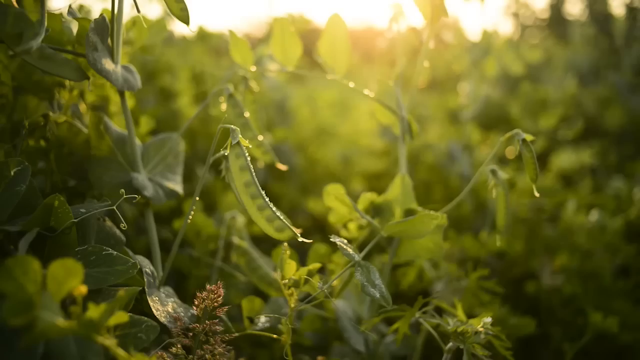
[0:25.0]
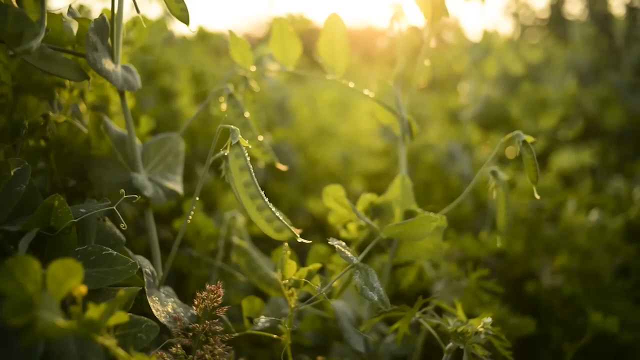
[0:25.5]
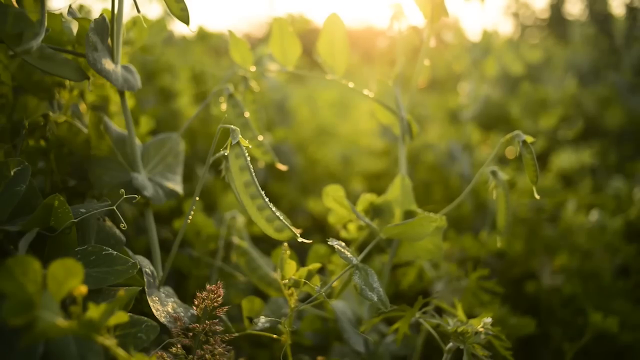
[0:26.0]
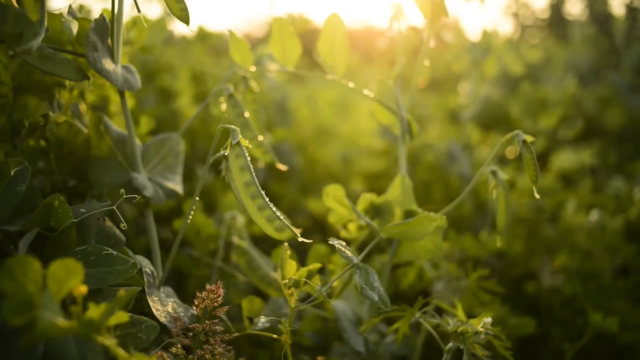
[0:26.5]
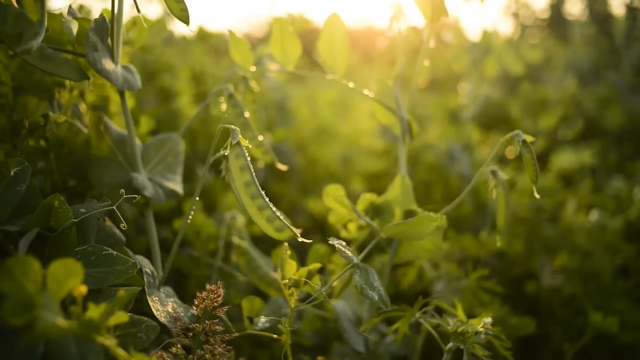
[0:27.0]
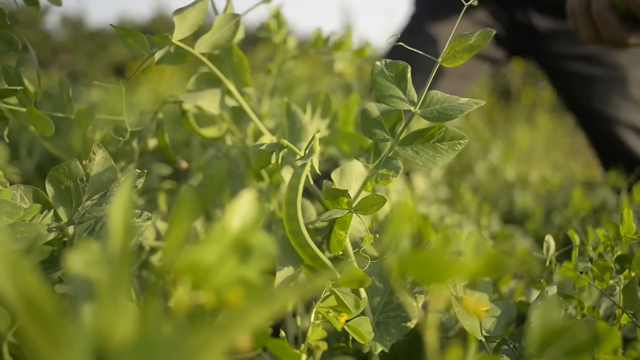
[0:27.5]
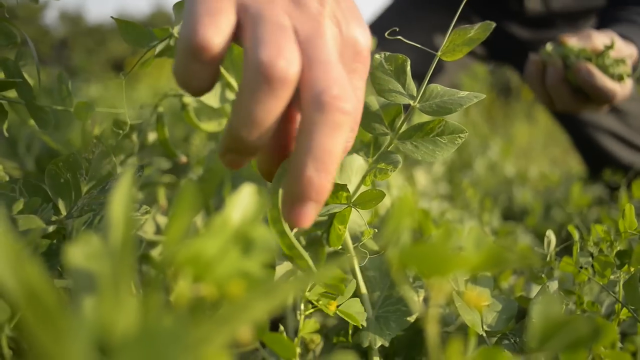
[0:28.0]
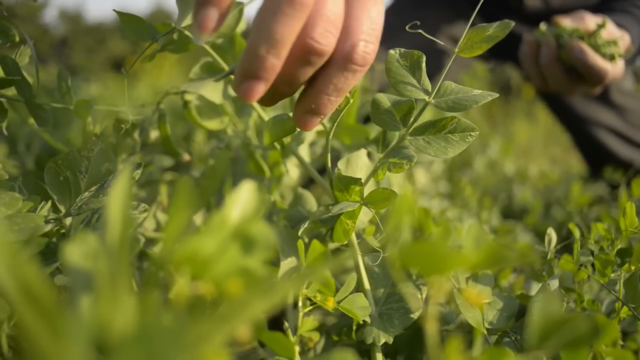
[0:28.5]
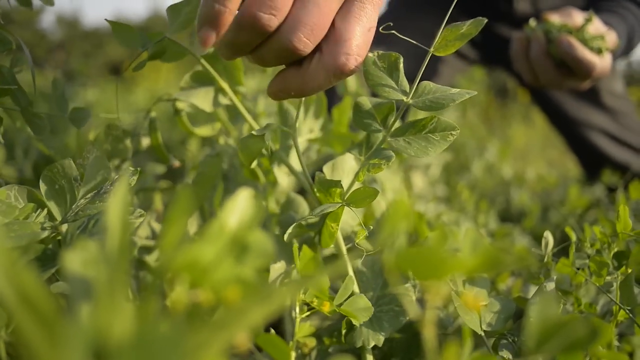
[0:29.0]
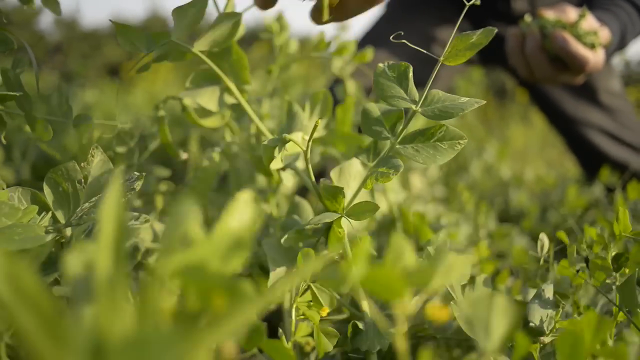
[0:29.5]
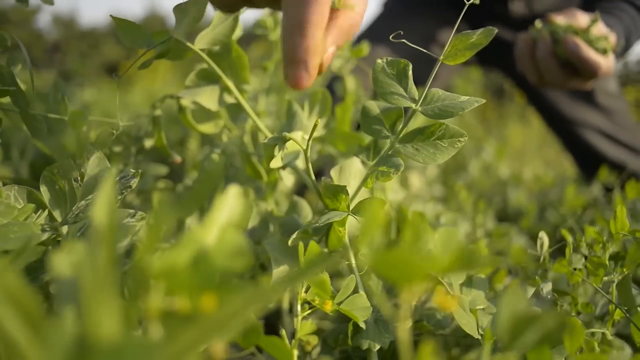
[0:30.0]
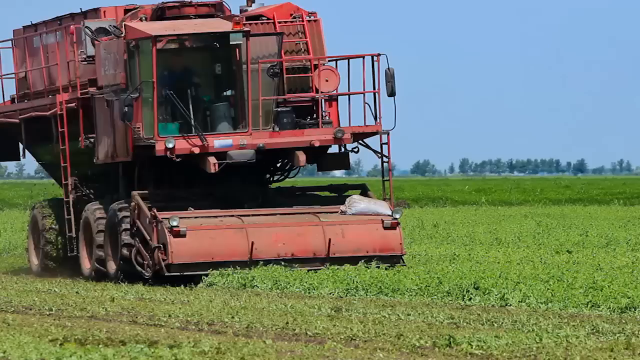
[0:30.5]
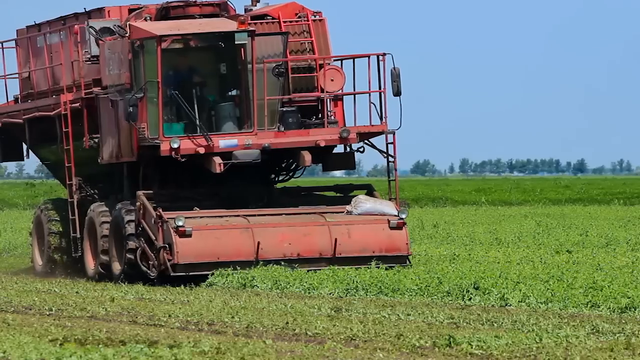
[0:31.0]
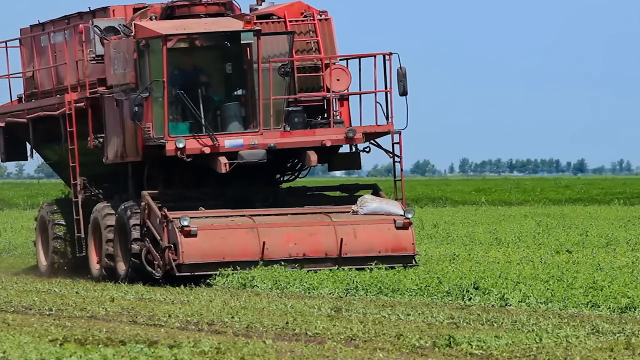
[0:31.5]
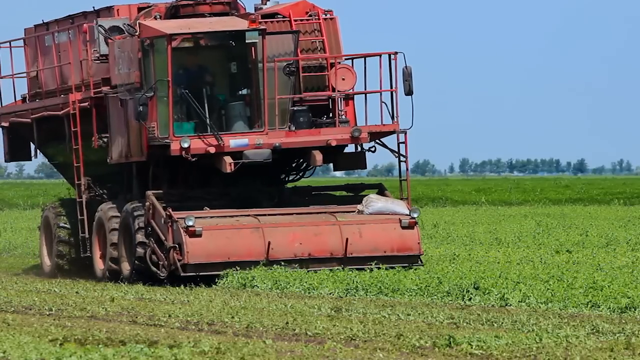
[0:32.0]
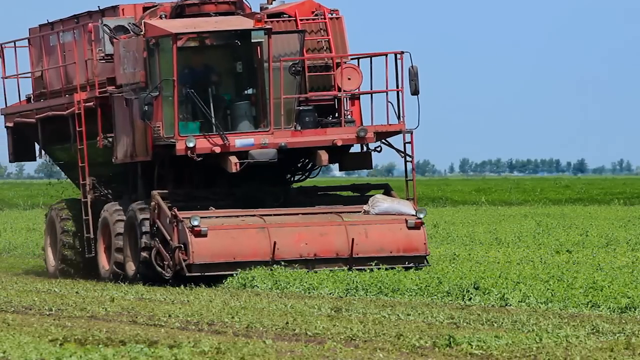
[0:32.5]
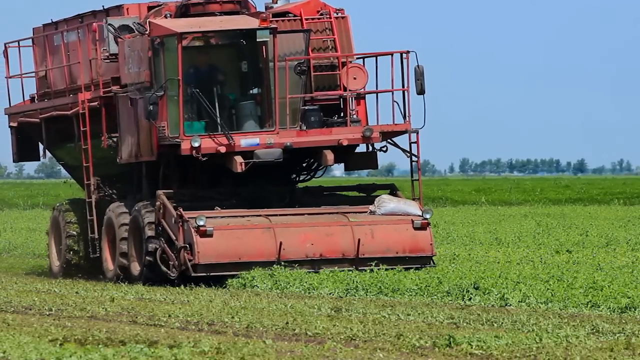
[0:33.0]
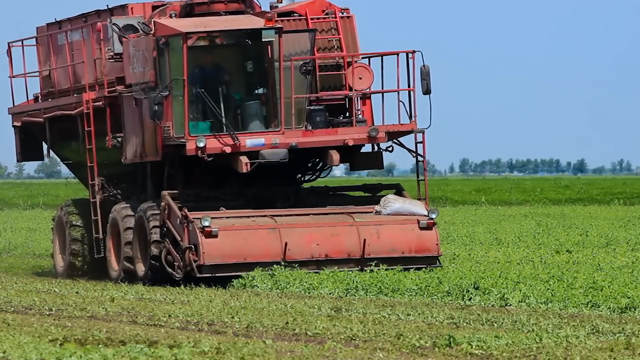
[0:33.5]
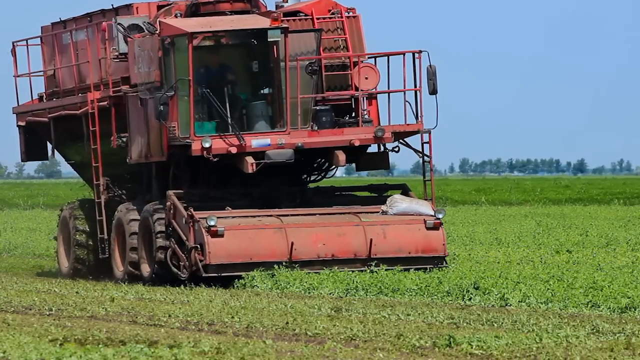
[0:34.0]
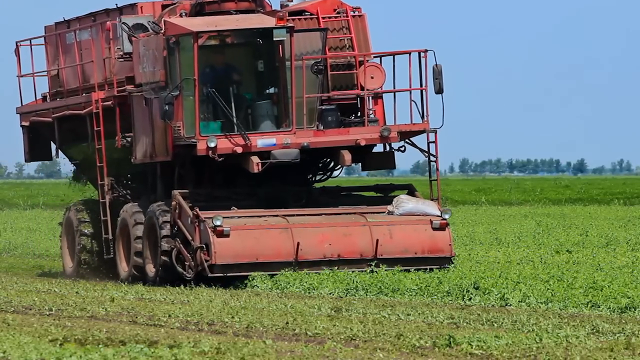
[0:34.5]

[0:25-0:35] A very close-up shot shows the pea plants, now taller, in what looks like mid-morning or late evening light, with the sun appearing to be either rising or setting. A pea is visible on one of the plants. A man picks peas off the plant; only the bottom half of him is visible. He holds a handful of peas in his left hand and picks with his right. He wears dark brown, though mainly only his legs and hand can be seen. Next, a very large machine, which looks like a combine or another type of farm machinery, harvests the pea plants, rolling slowly over them and picking them. Three tires are visible on its left-hand side.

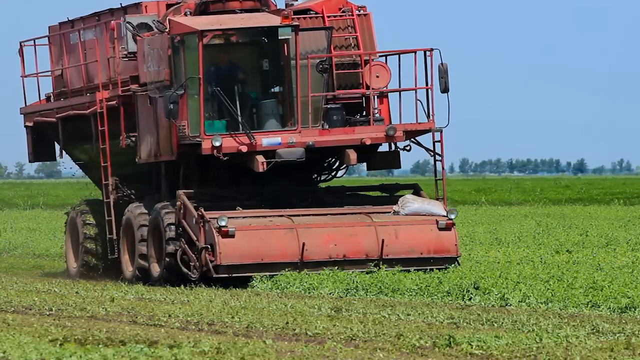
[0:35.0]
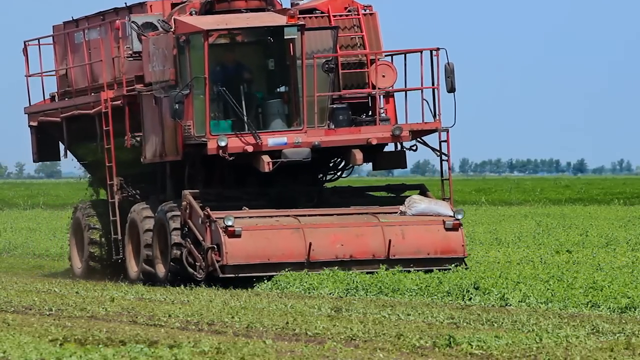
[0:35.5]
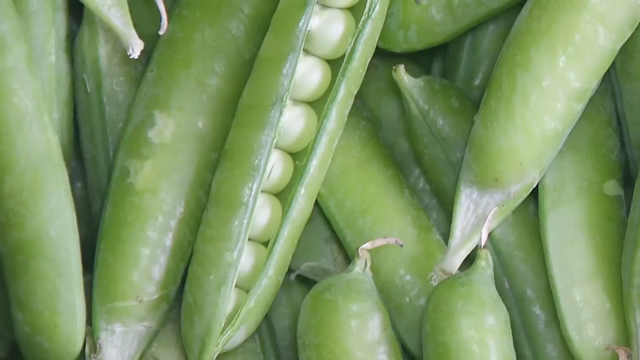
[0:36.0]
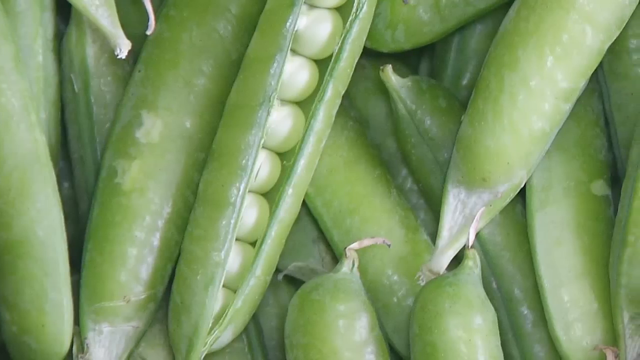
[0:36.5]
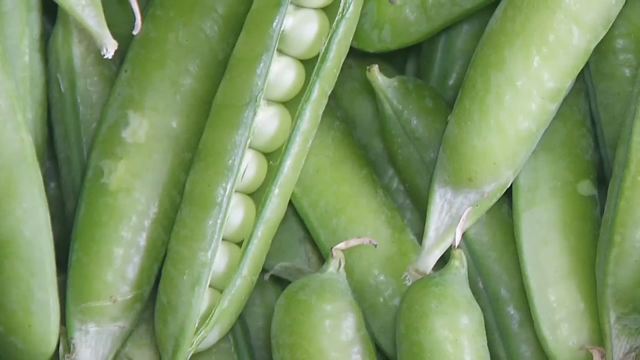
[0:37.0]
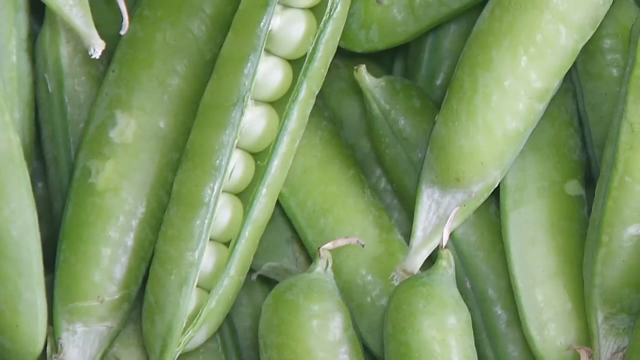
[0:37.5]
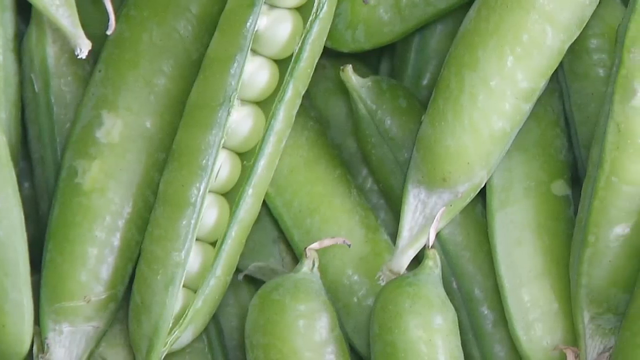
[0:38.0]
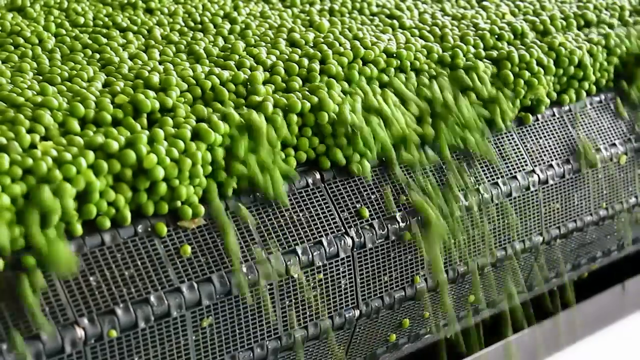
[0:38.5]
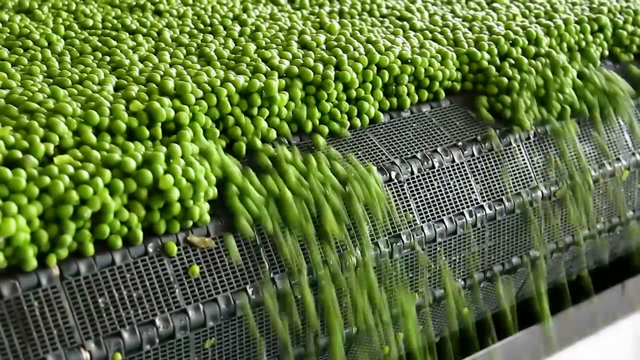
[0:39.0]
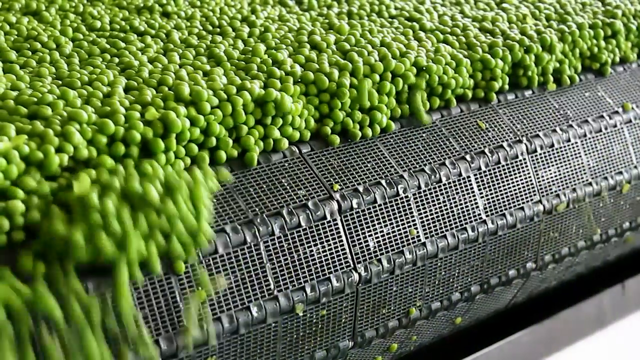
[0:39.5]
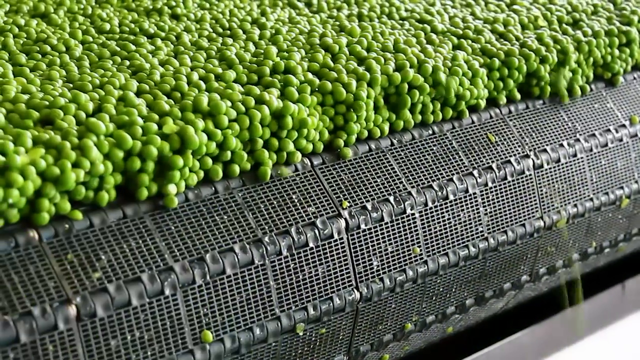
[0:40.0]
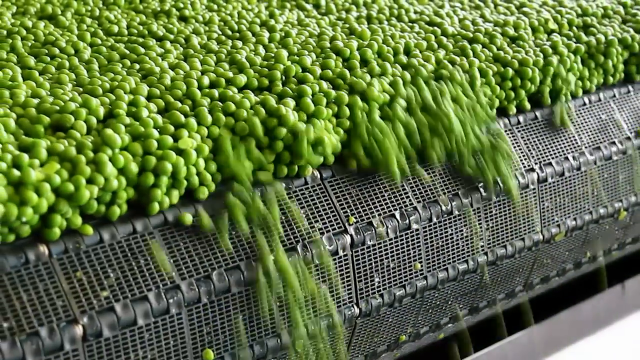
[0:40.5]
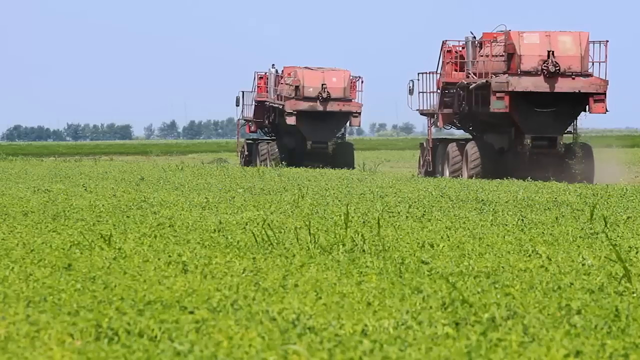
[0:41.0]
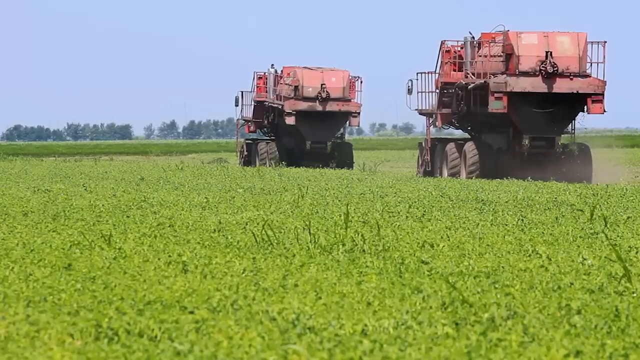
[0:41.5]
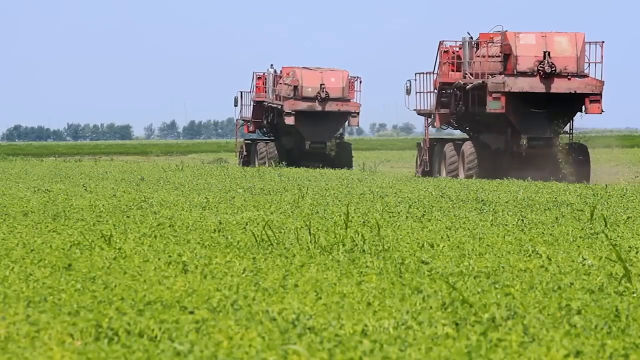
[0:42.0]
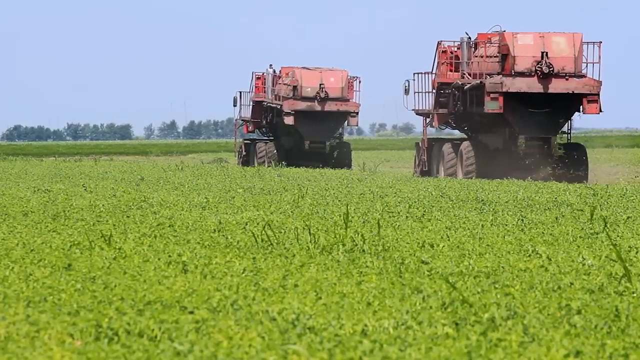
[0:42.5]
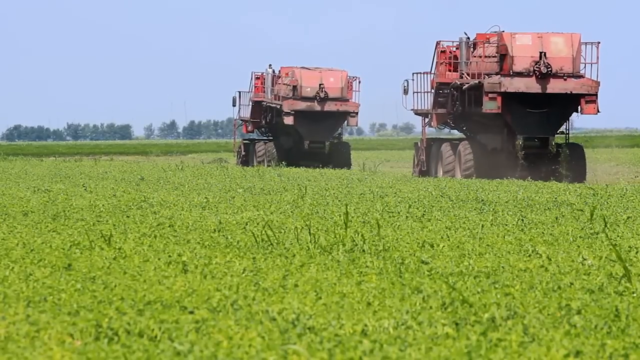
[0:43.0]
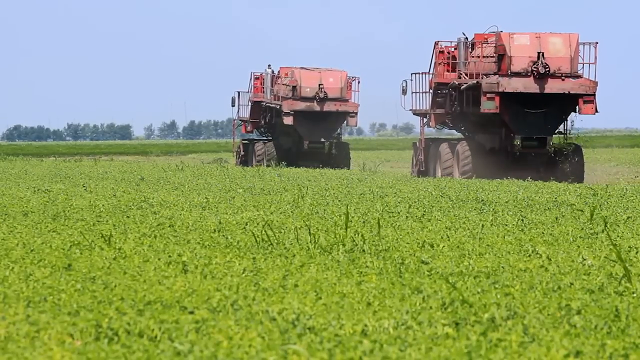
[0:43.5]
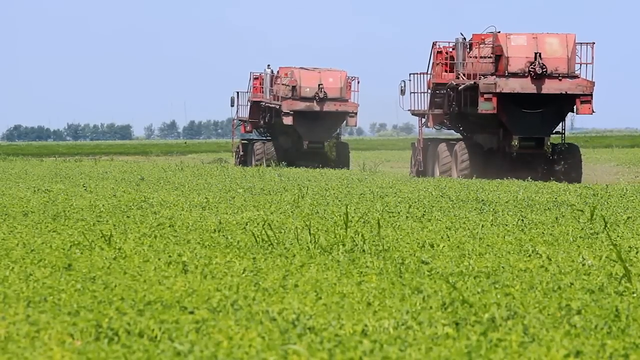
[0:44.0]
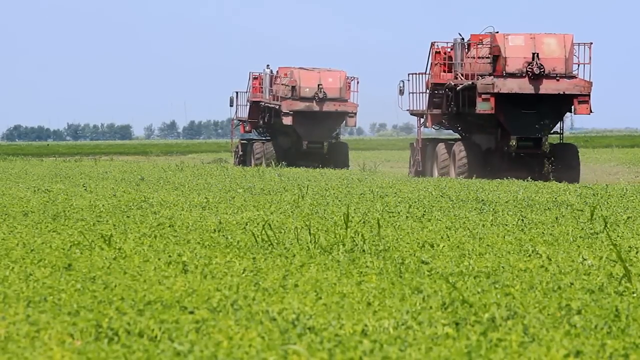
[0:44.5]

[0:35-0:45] A quick shot shows the harvesting machinery slowly picking peas in the field. A very close-up shot follows of a couple of opened pea pods with the peas visible inside the shells. Then a machine that has pulled all the peas out of their shells is shown, with shelled peas falling off the machinery. The setting looks like some type of warehouse where the peas are processed for packaging. The machinery is dark gray, and the shelled peas all look very fresh and new.